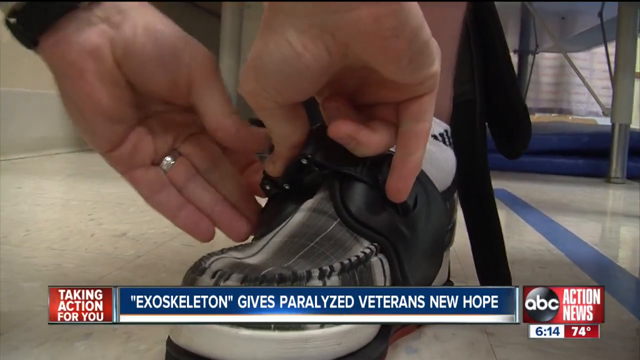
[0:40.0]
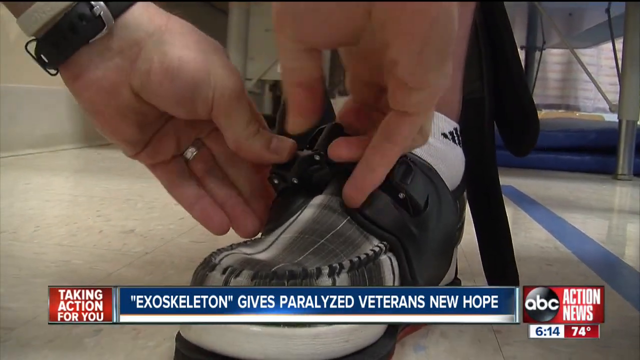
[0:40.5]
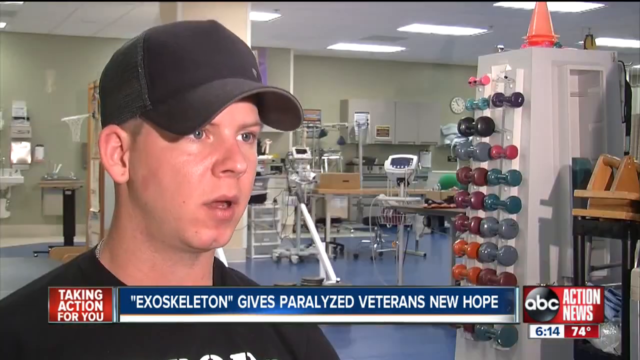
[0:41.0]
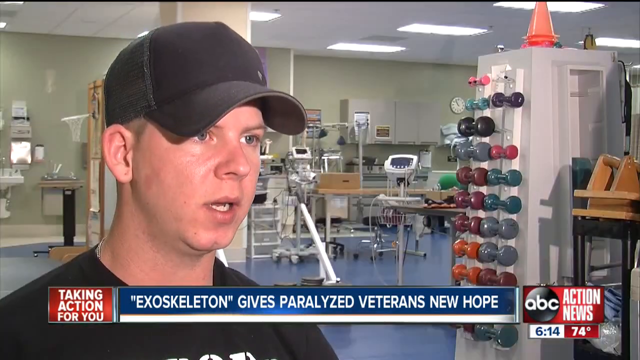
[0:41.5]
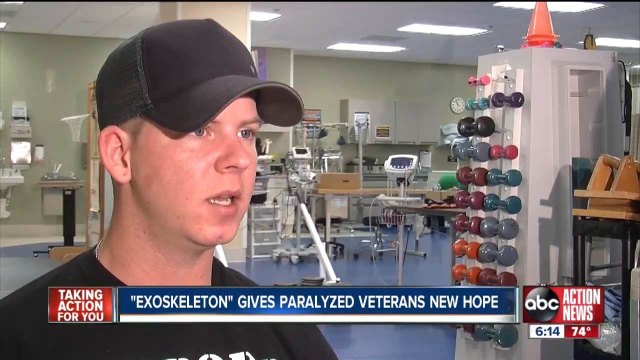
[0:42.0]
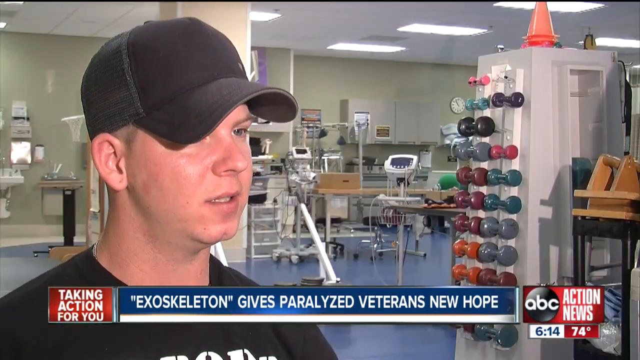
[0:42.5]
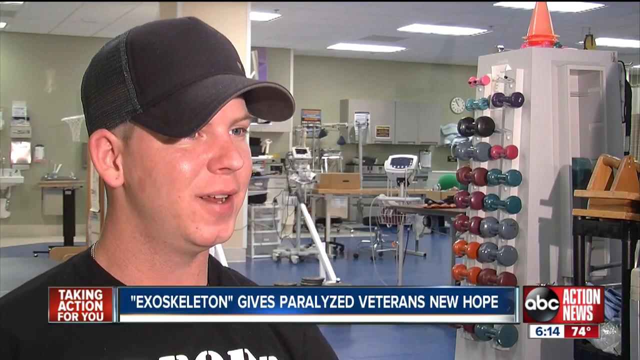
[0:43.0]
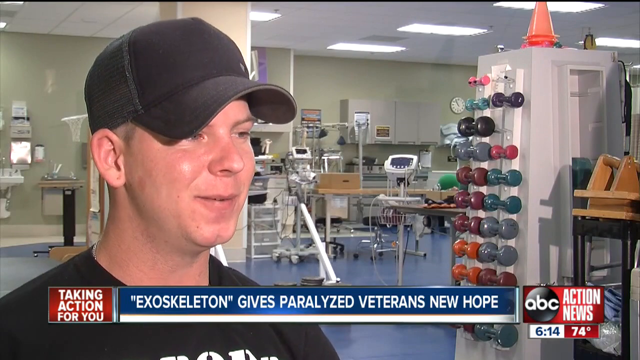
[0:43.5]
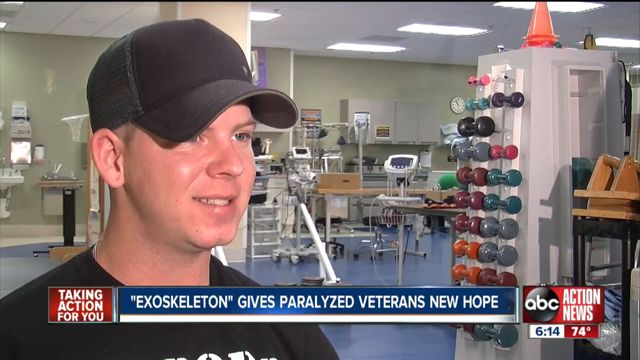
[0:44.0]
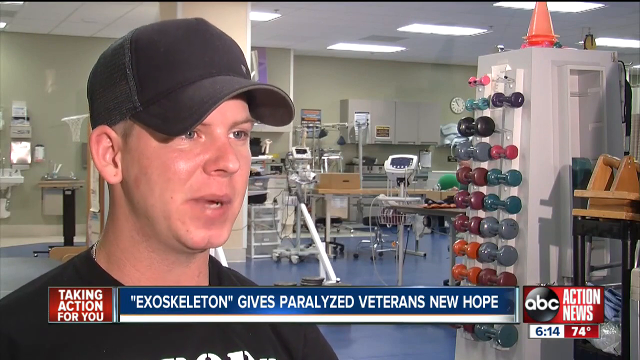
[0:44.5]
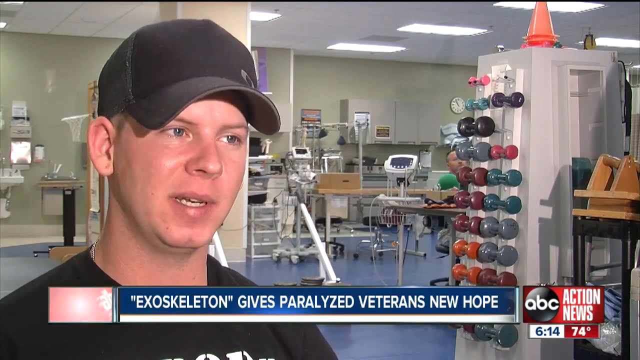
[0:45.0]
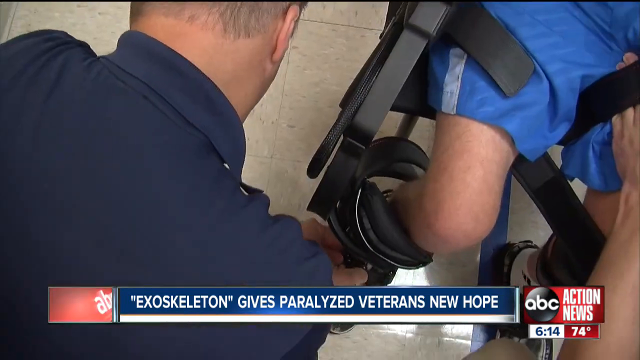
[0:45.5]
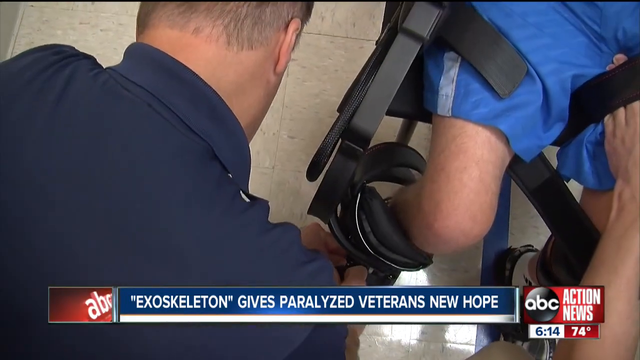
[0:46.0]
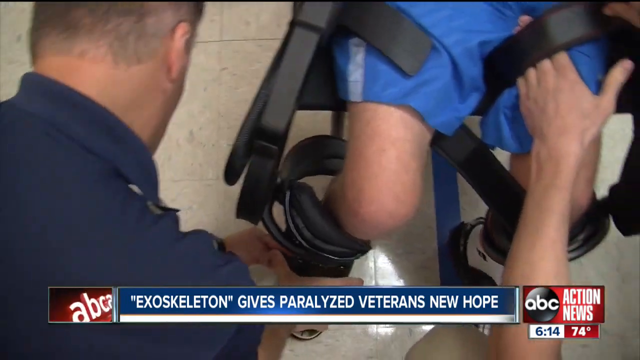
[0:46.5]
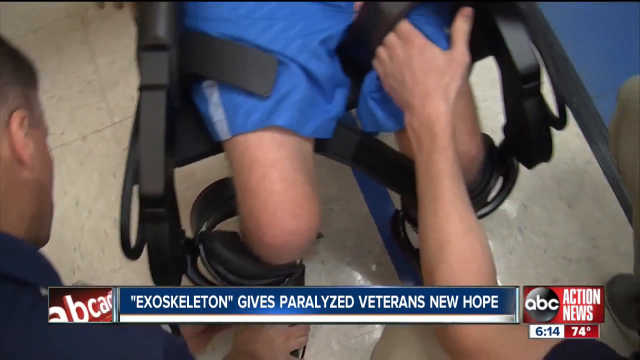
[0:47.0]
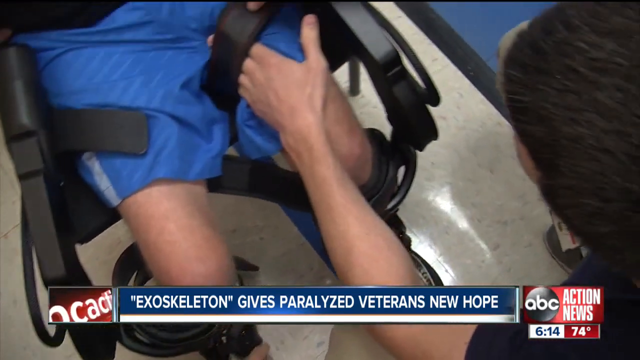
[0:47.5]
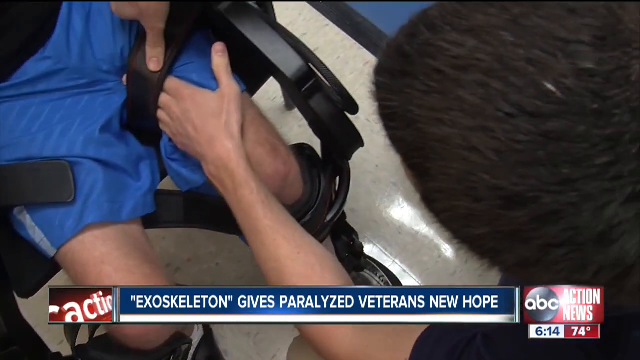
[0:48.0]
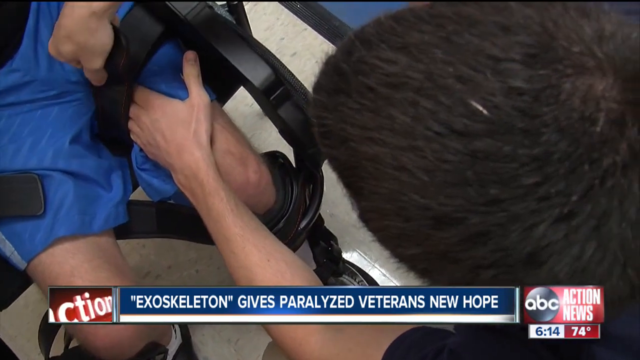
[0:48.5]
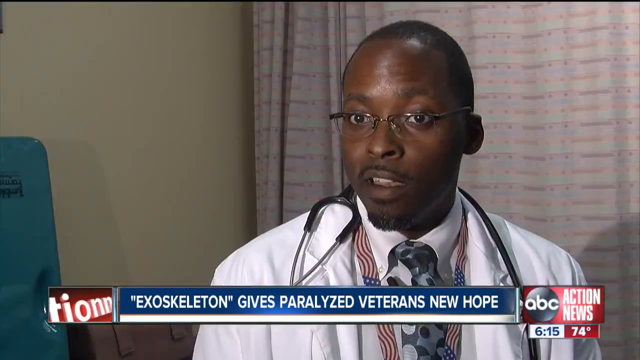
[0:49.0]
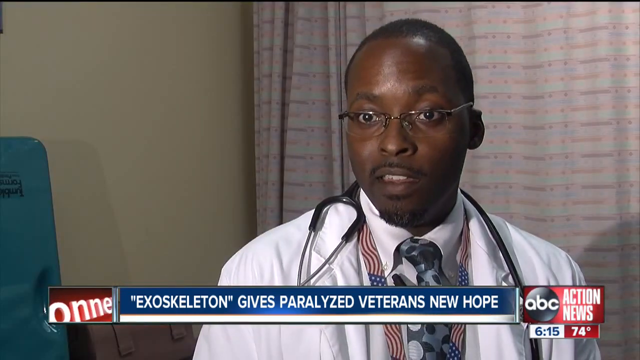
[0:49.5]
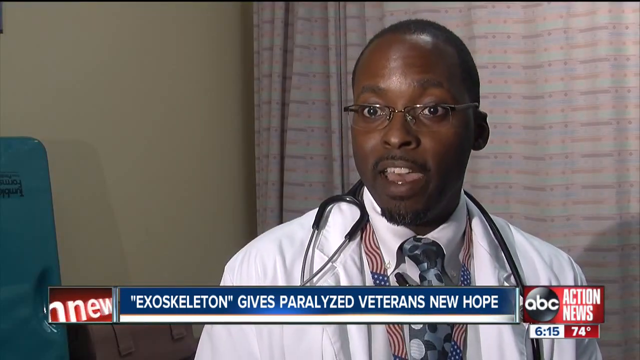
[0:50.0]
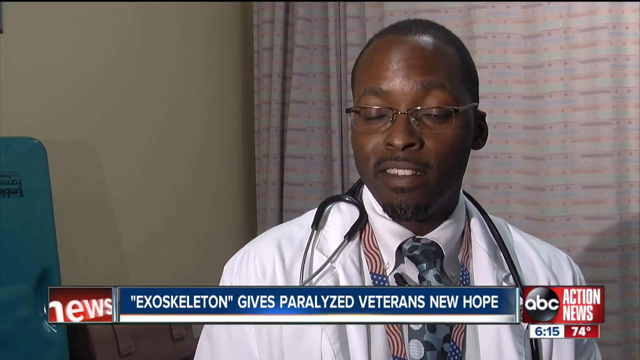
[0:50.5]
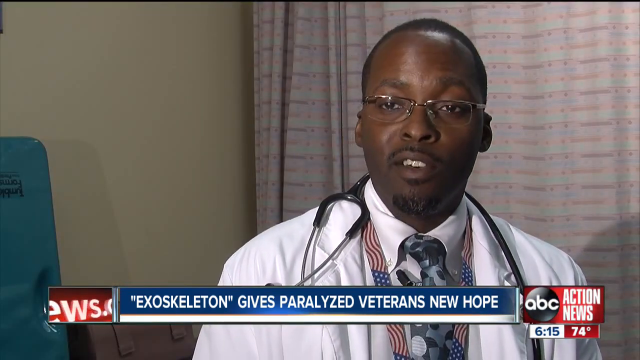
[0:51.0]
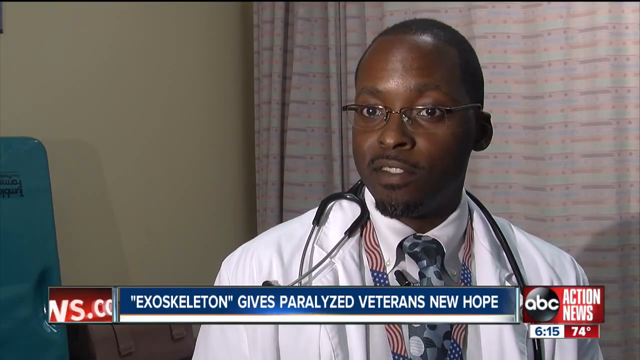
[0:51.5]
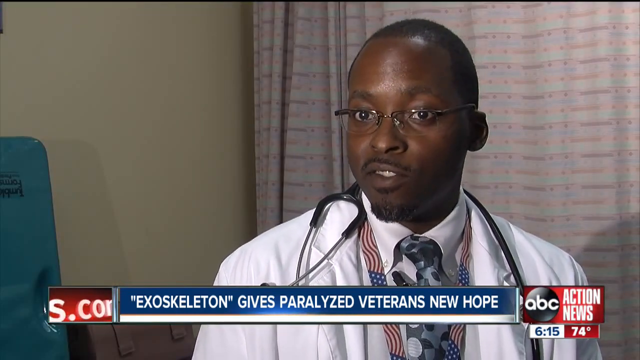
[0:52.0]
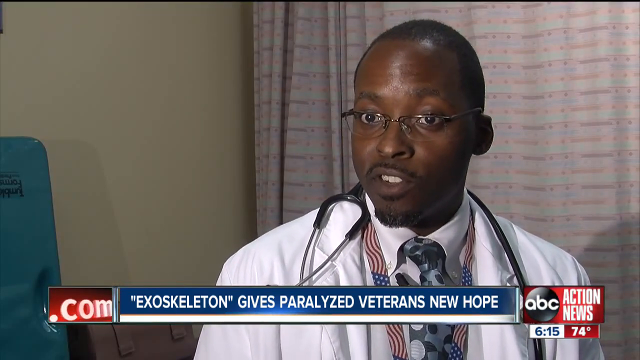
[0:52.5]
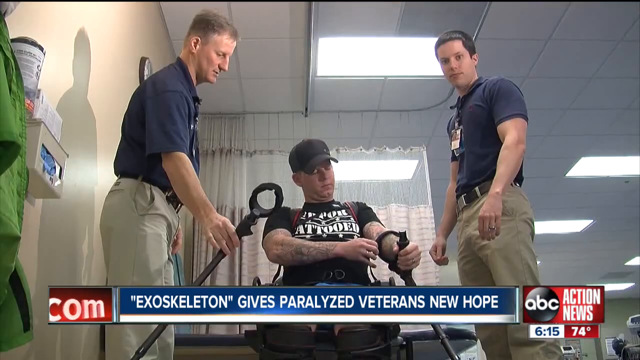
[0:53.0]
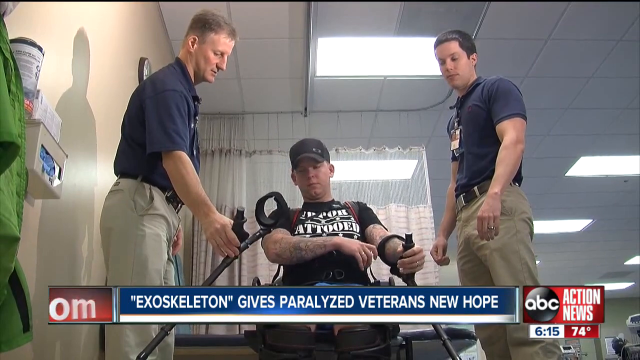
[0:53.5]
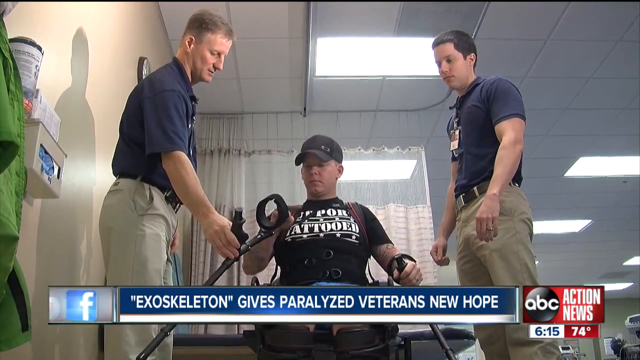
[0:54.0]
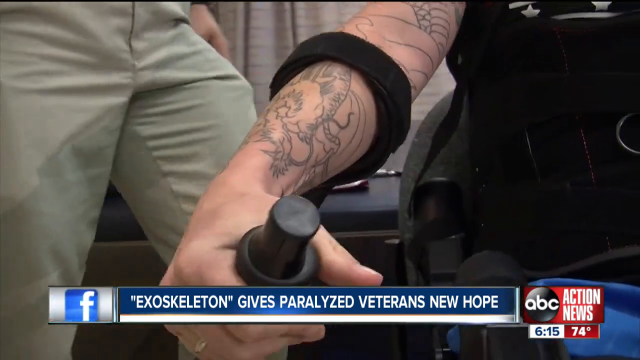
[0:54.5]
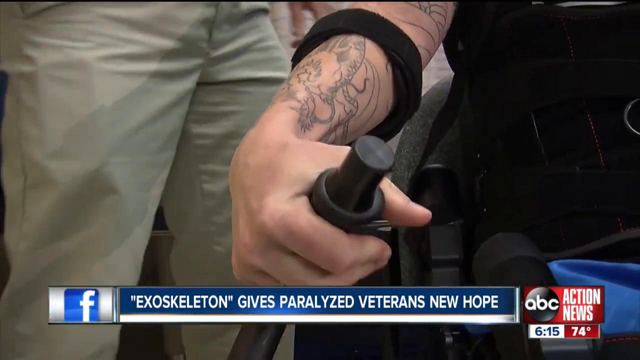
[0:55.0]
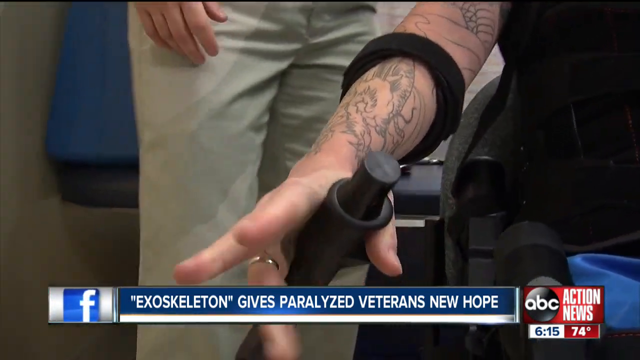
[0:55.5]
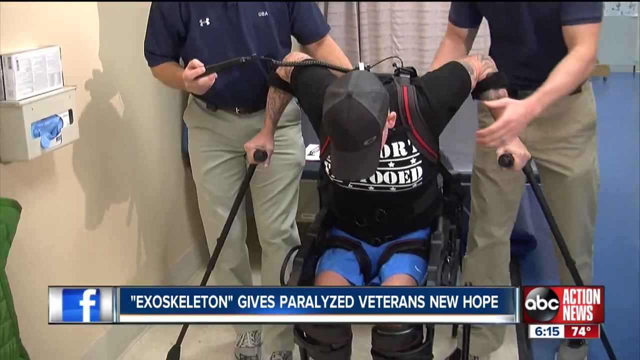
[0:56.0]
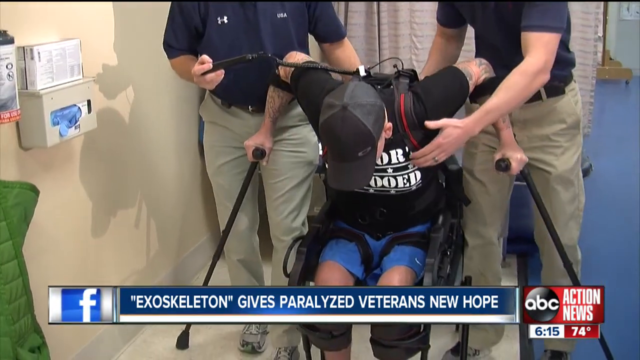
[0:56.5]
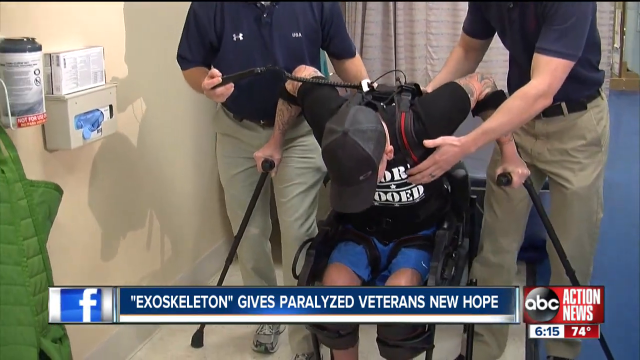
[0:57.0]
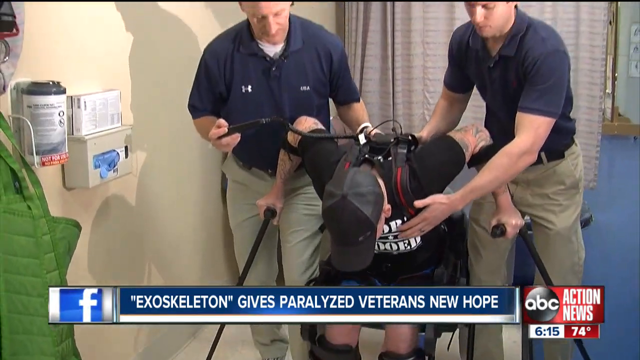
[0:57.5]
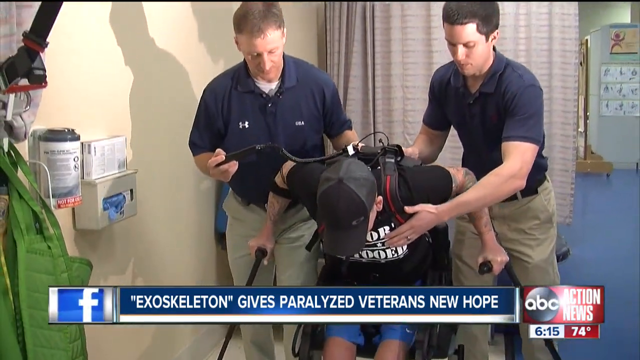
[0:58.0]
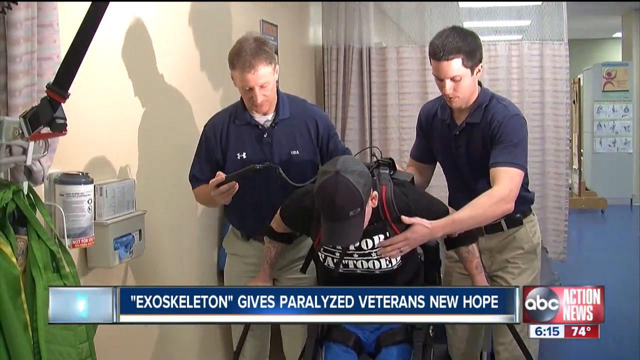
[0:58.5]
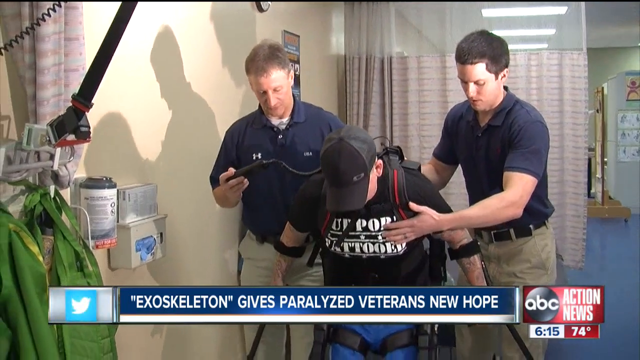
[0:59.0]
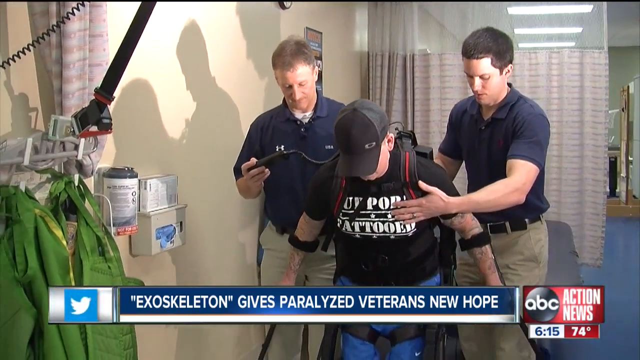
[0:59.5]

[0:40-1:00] A close-up shows a person's foot being secured to the footrest of a wheelchair. In a physical therapy room, a man in a black baseball cap and black t-shirt sits while being interviewed; the ABC Action News piece, taking action for you, features a veteran paralyzed during deployment. The room contains dumbbells, monitoring equipment, and possibly a sink. A close-up shows the soldier being helped and strapped in while in his wheelchair. Next, a seated physician is shown up close, wearing a white doctor's coat with a stethoscope resting around his shoulders; he smiles while being interviewed. The paralyzed soldier is then helped up and out of his wheelchair by two men, with some sort of backpack strapped to his back, and he is able to stand up partially on his own.